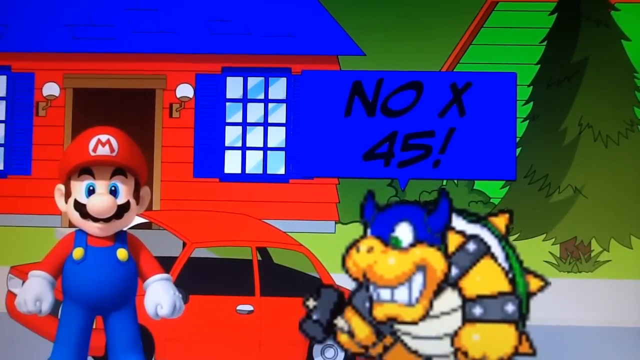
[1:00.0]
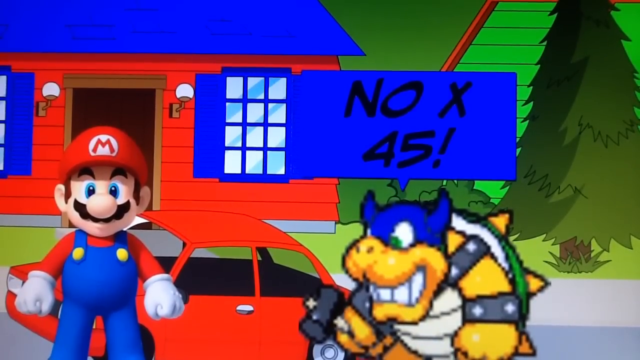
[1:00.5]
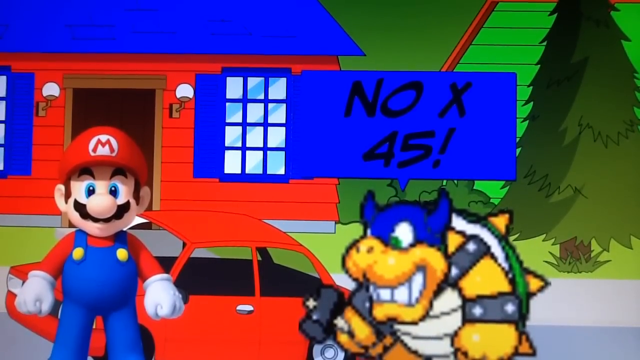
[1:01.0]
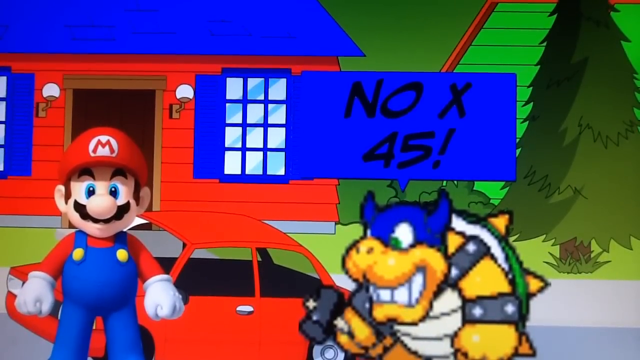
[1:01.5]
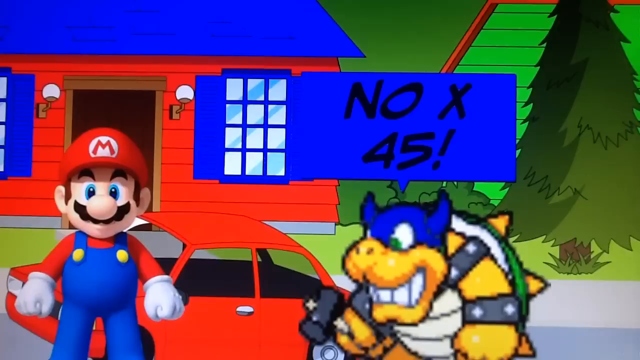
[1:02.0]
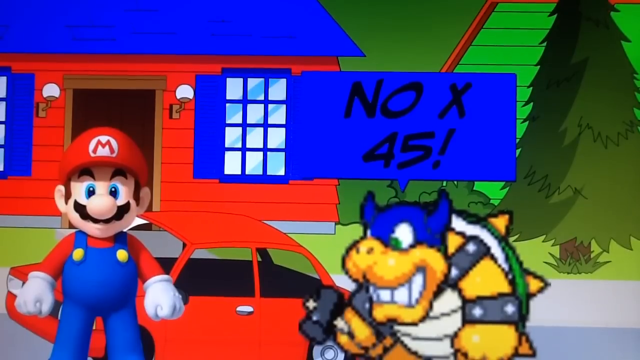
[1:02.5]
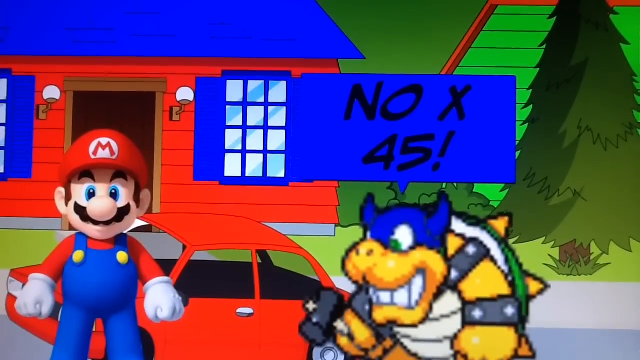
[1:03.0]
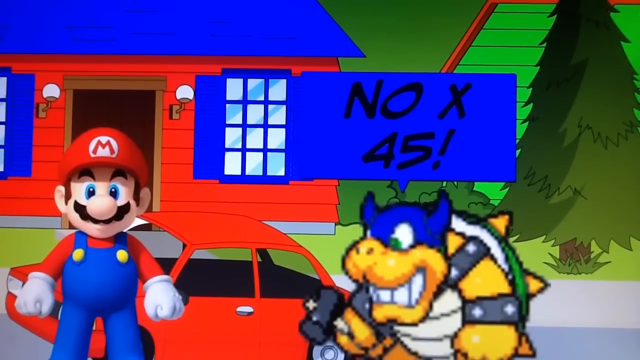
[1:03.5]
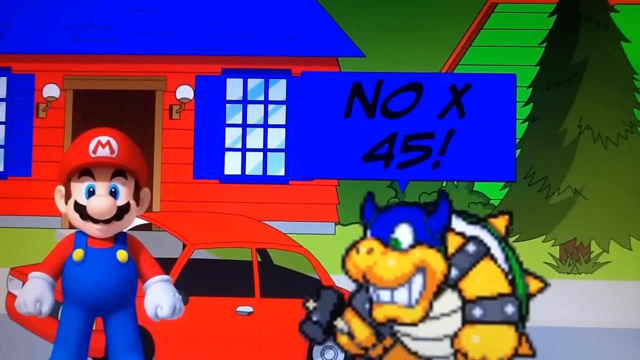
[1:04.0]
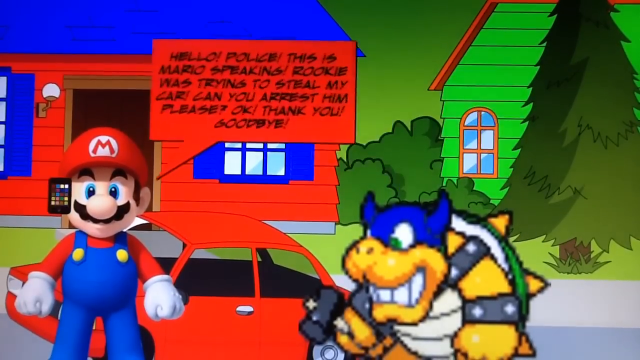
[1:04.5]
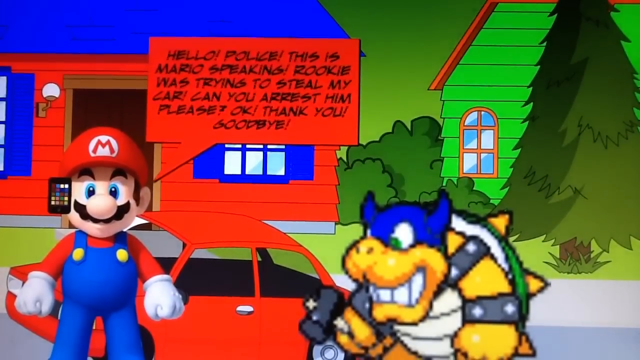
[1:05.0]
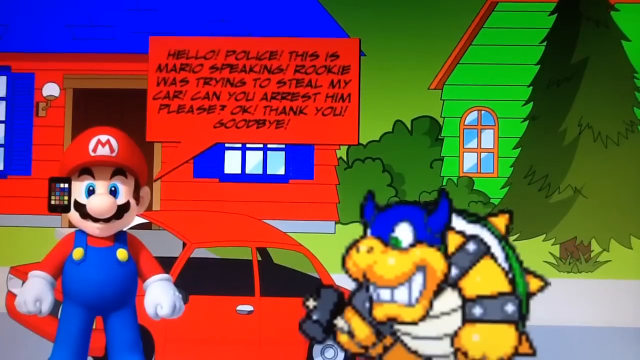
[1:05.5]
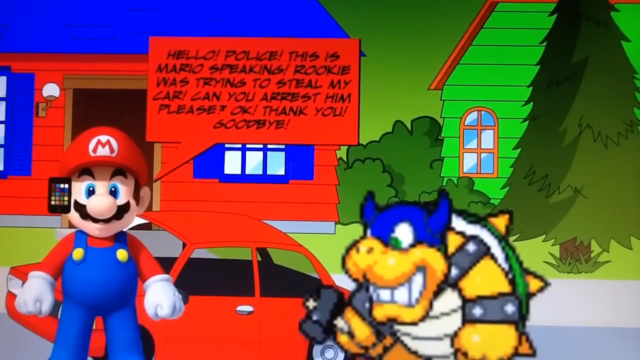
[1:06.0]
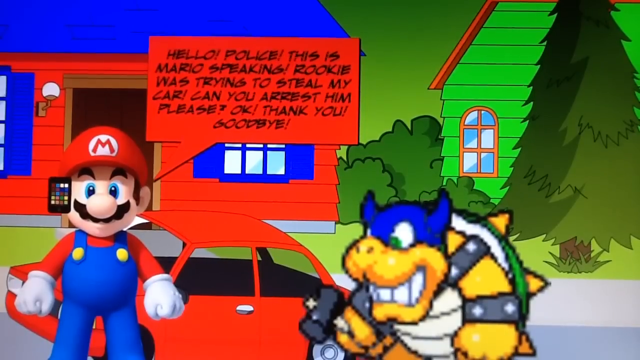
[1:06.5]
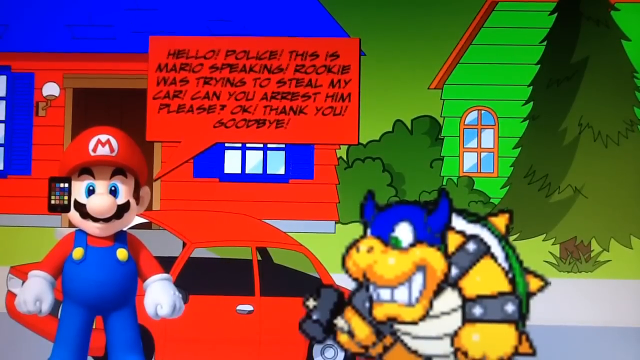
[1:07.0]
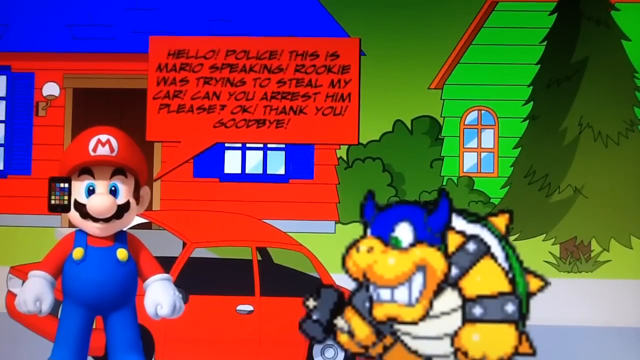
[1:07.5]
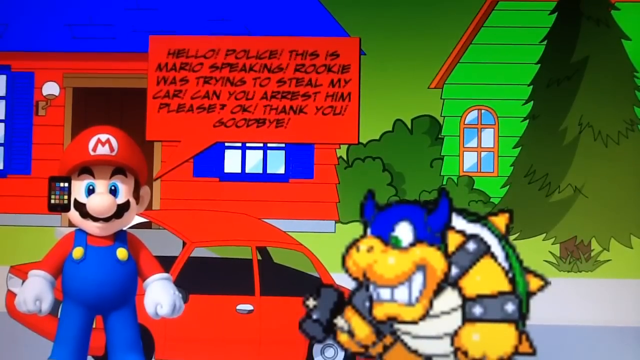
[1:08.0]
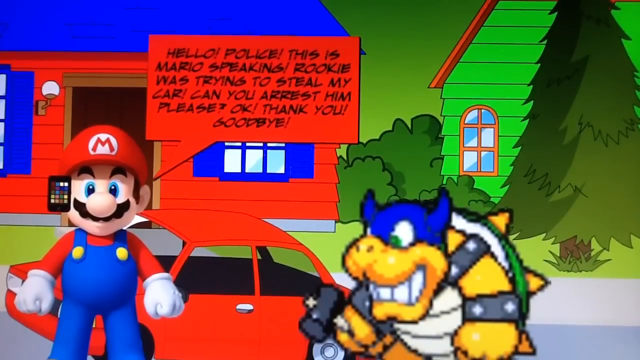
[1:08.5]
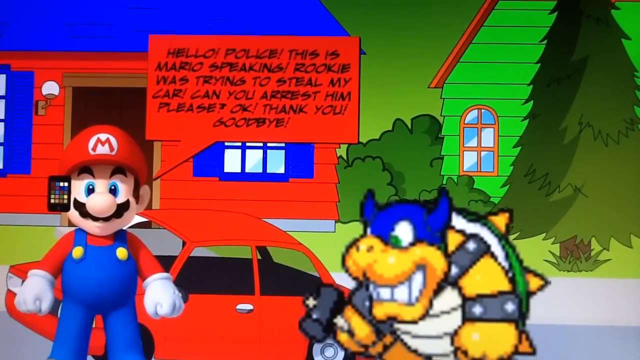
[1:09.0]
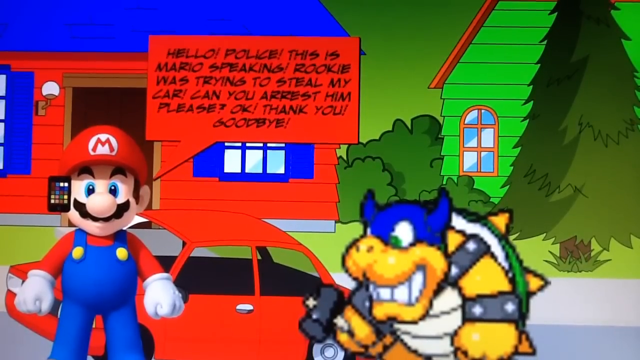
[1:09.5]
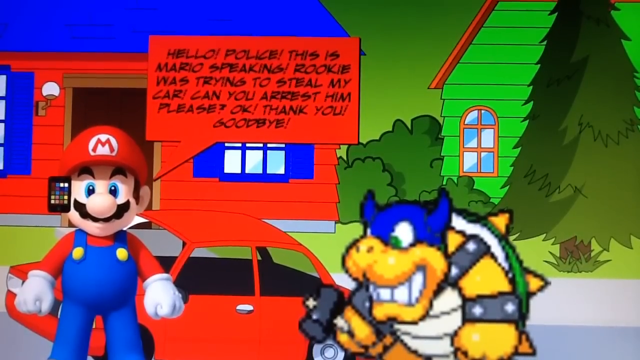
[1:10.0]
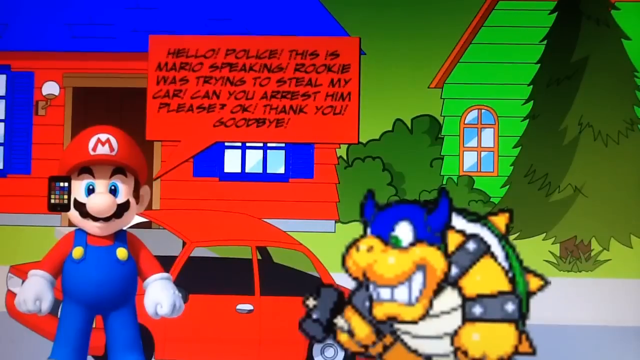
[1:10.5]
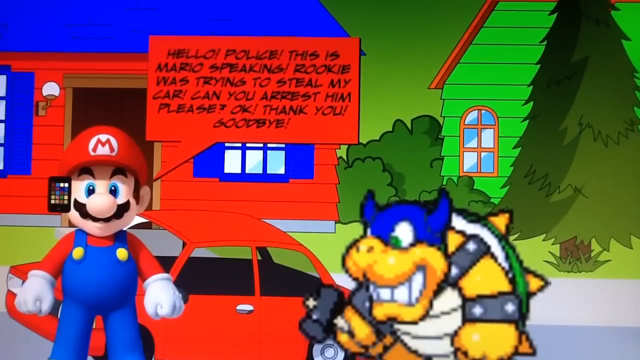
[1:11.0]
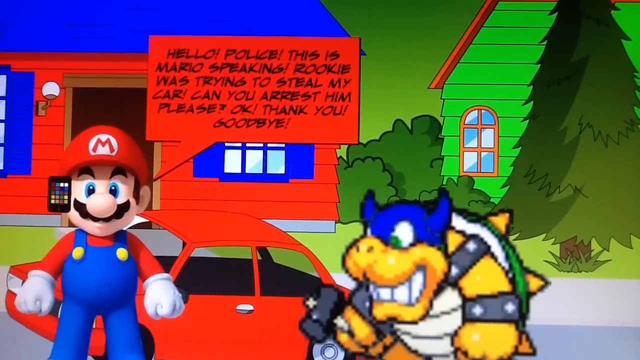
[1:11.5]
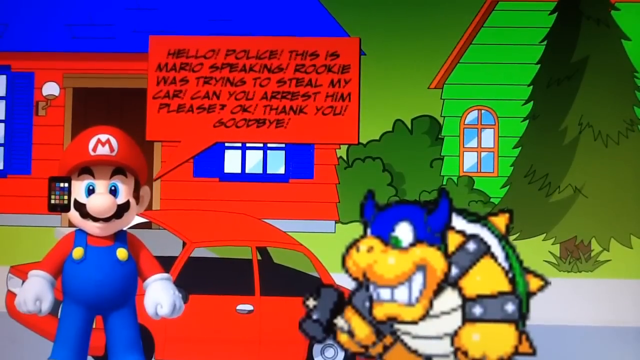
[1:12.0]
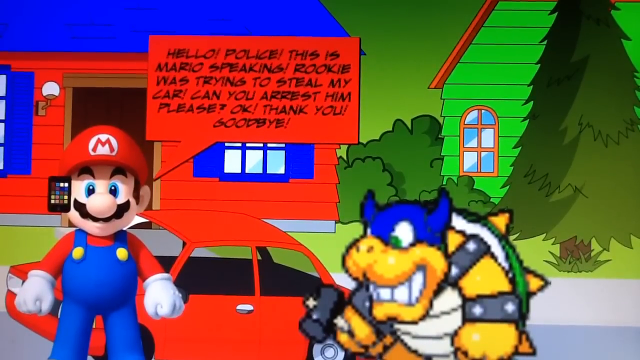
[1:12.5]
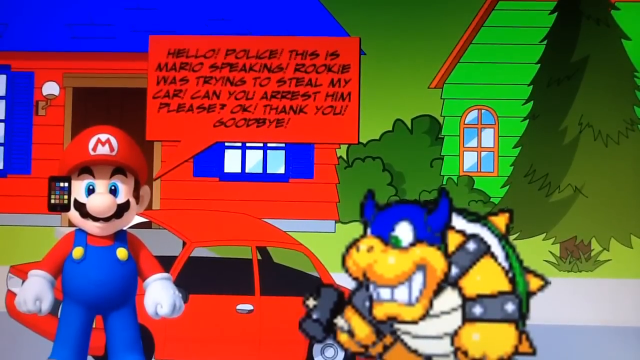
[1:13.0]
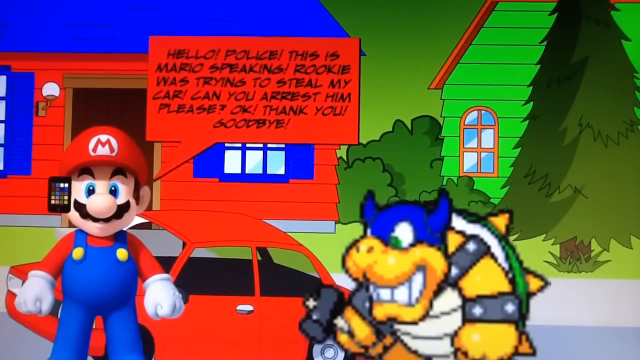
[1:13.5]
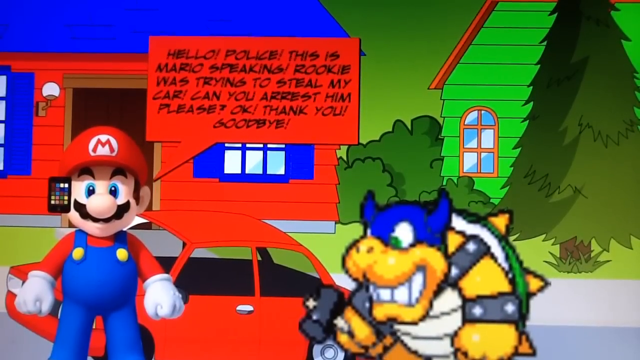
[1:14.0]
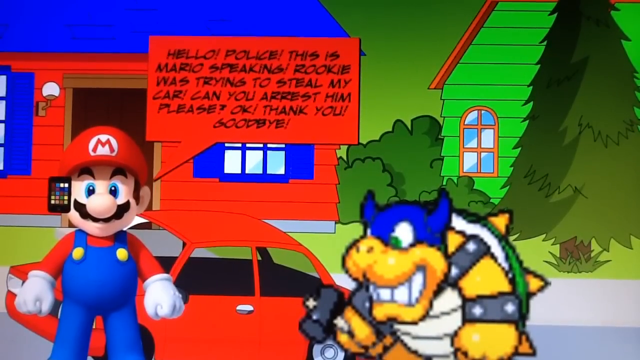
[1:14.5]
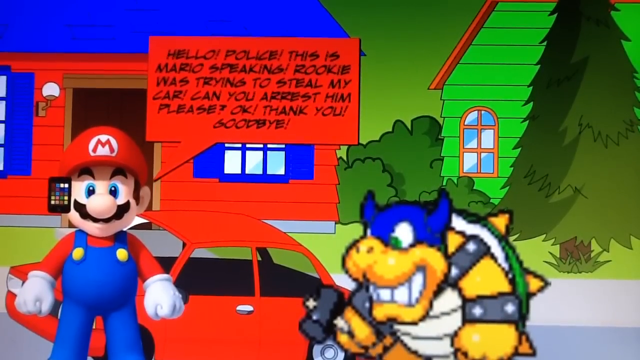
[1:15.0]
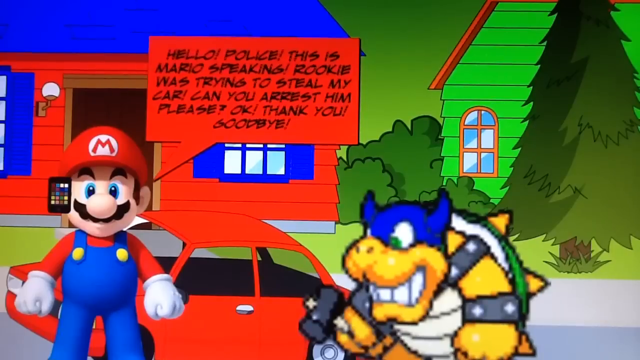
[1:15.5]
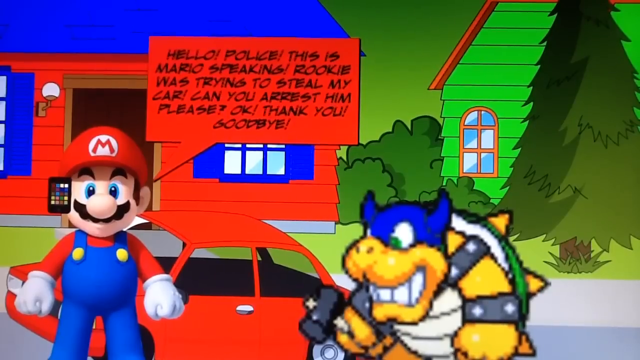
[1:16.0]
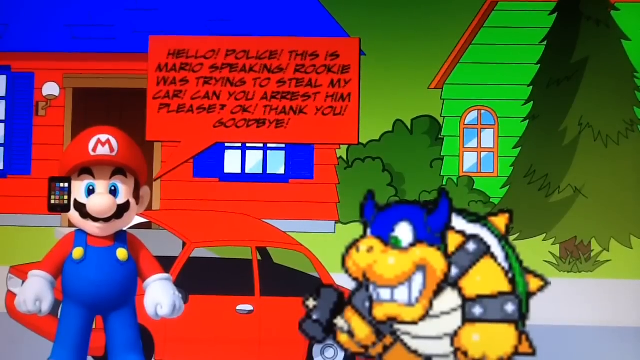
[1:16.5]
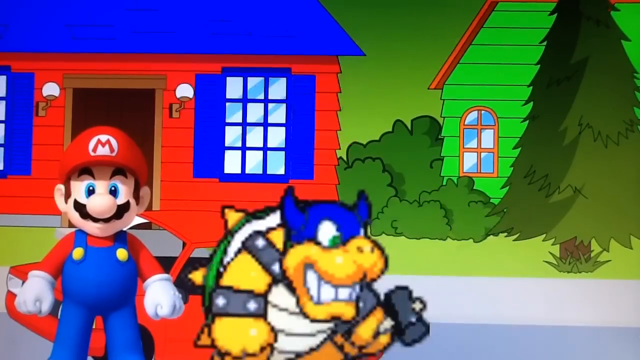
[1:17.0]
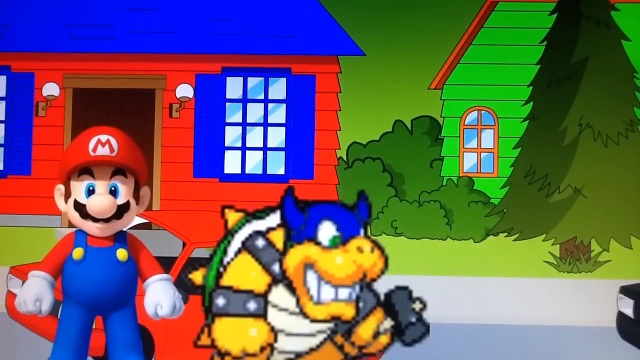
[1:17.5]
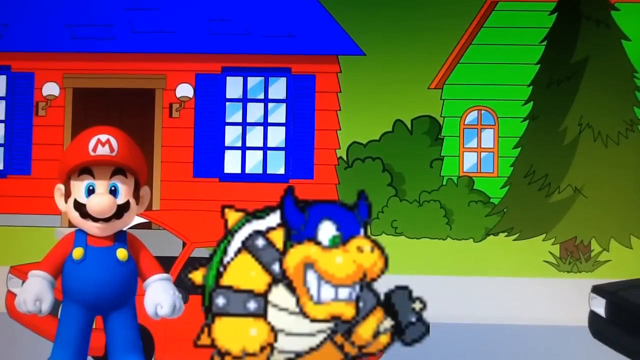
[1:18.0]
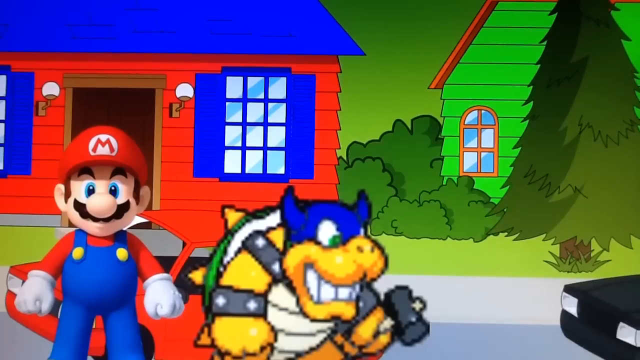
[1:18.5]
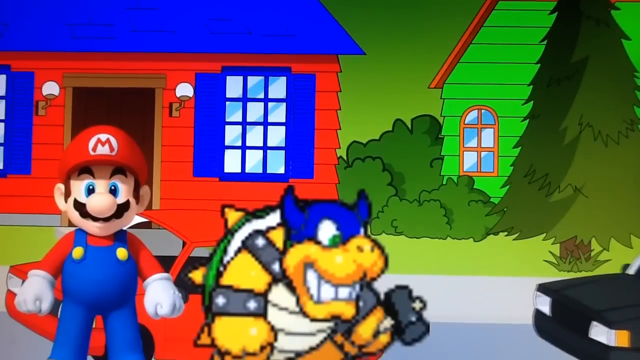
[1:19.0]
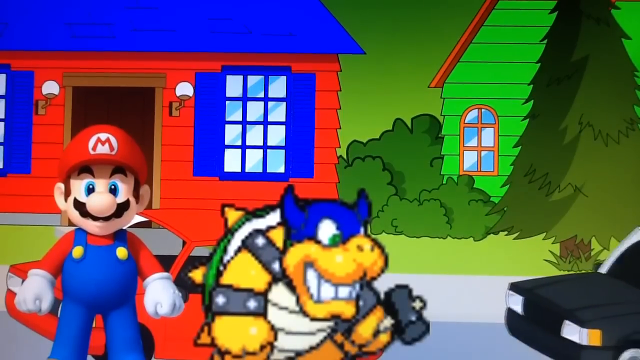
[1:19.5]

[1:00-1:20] After Mario confronts Rookie, something meant to represent a phone appears on the left side of Mario's head, apparently to show that he is talking on the phone. A red call-out bubble, square rather than round, appears that says, "Hello police. This is Mario speaking. Rookie was trying to steal my car. Can you arrest him? Please. Okay. Thank you. Goodbye." Slowly, Rookie, still in his blue mask with blue horns, with his hammer in hand and his spiked shell on his back, turns to the right, facing away from Mario. Rookie is in the middle of the screen and Mario is still on the left. Mario's phone disappears, and on the right a black police car slowly drives into the shot. Rookie watches the car approach; his hammer now looks like it is in his left hand.